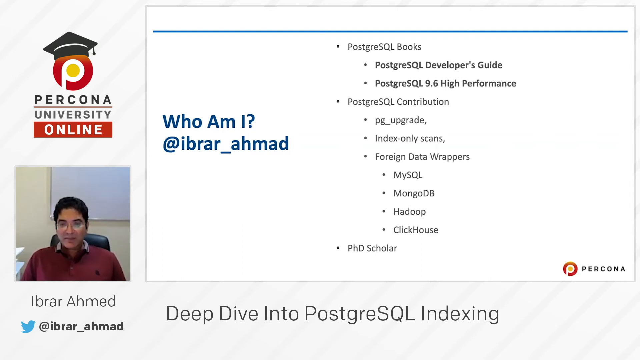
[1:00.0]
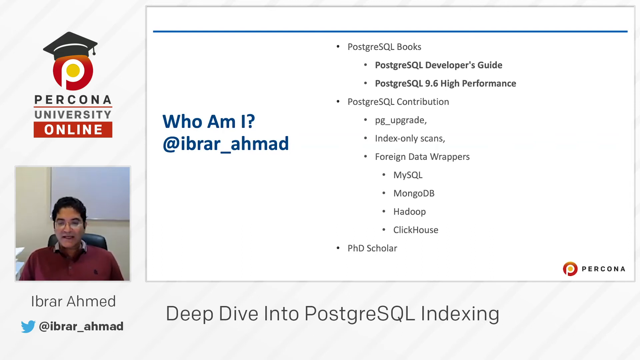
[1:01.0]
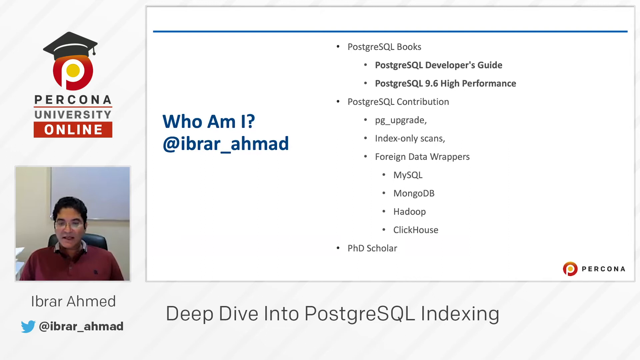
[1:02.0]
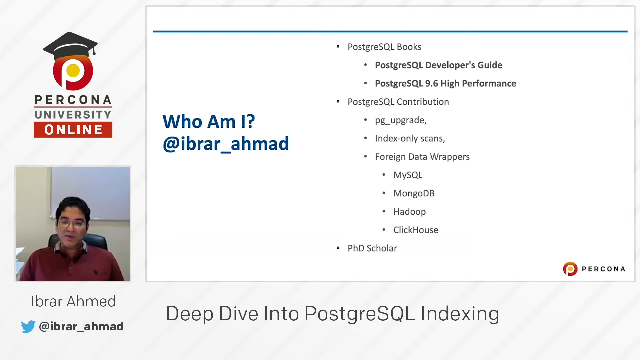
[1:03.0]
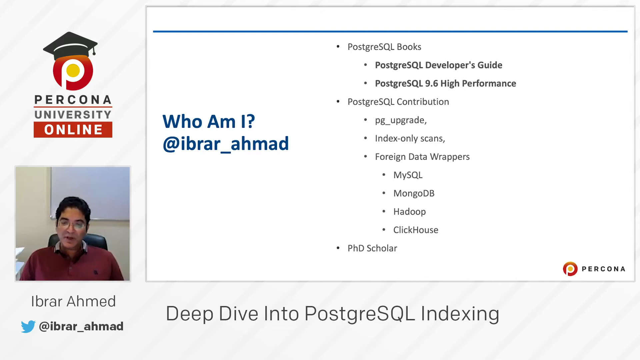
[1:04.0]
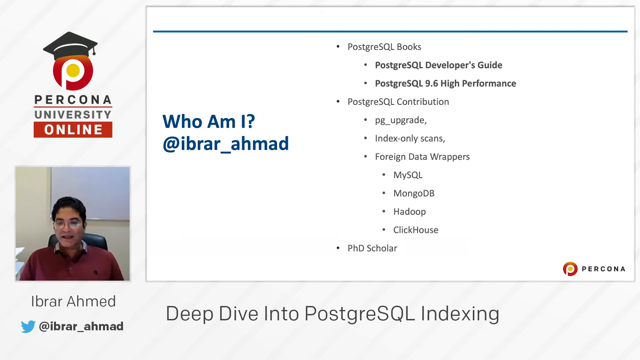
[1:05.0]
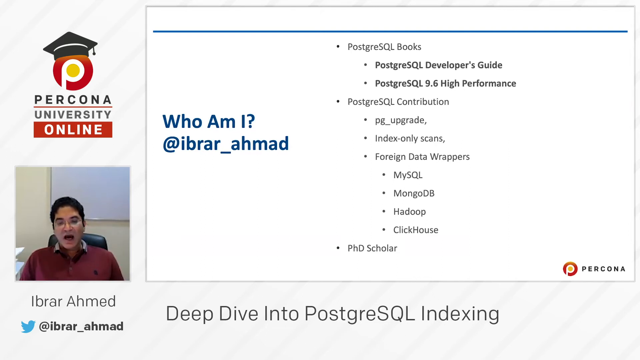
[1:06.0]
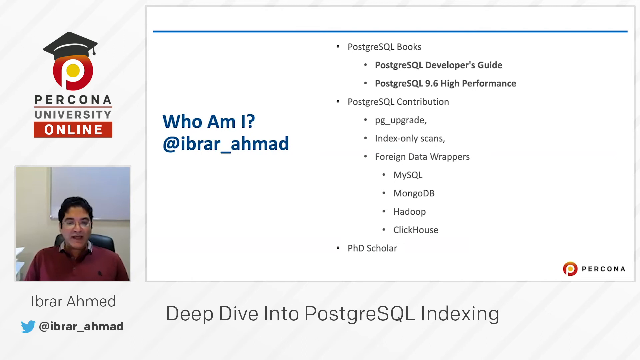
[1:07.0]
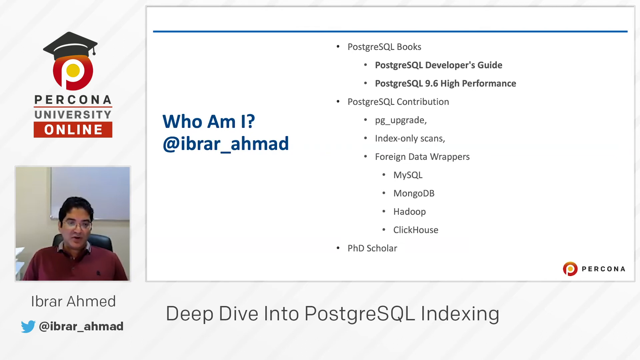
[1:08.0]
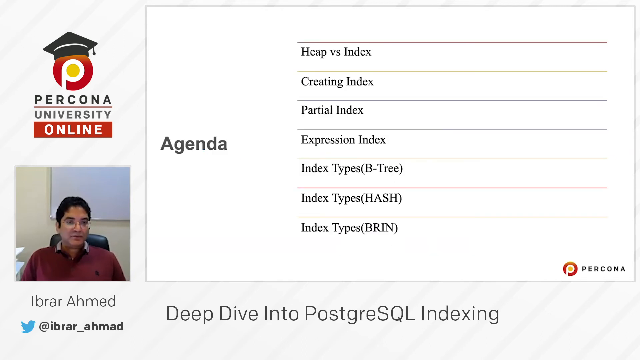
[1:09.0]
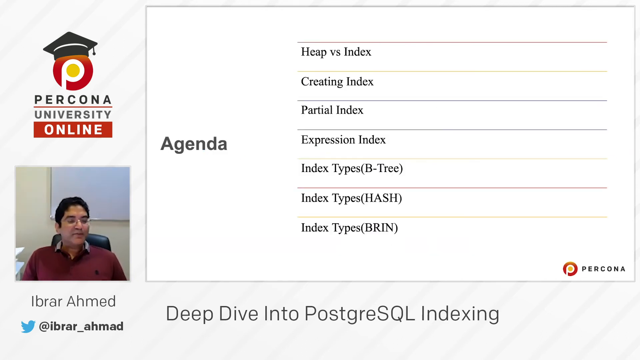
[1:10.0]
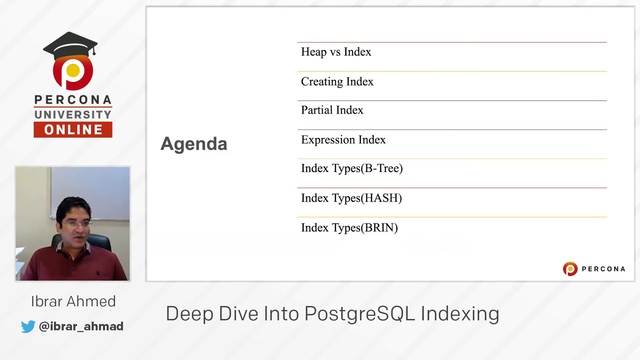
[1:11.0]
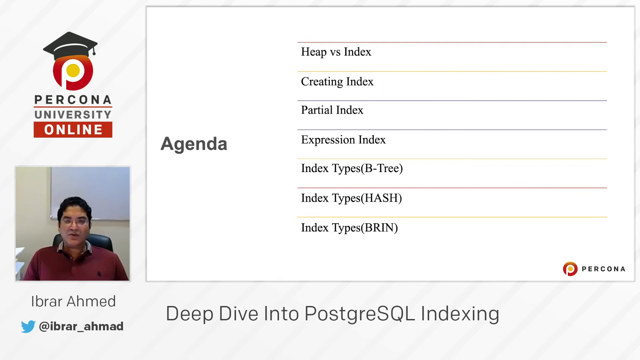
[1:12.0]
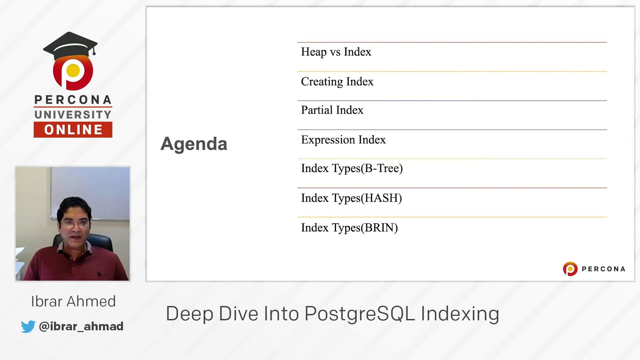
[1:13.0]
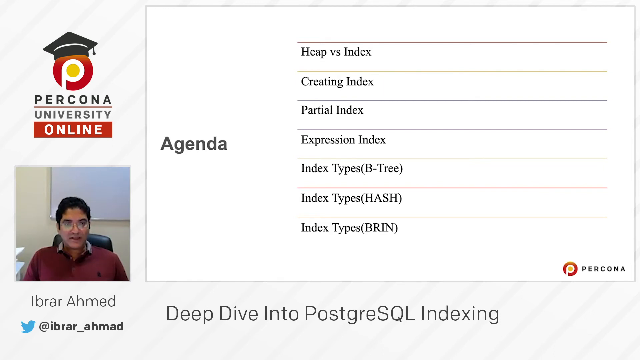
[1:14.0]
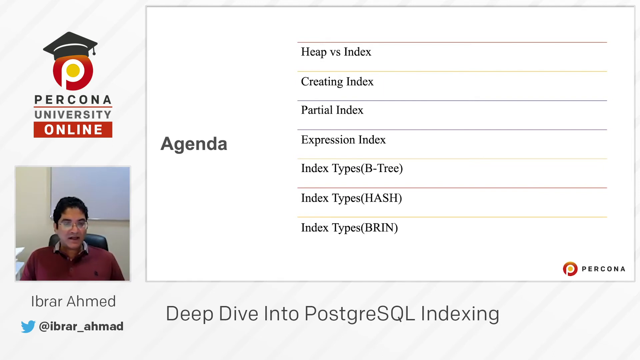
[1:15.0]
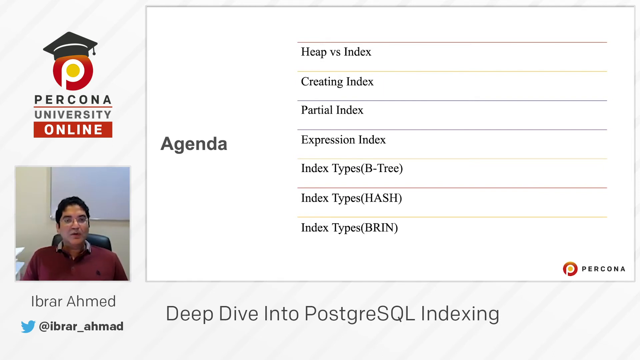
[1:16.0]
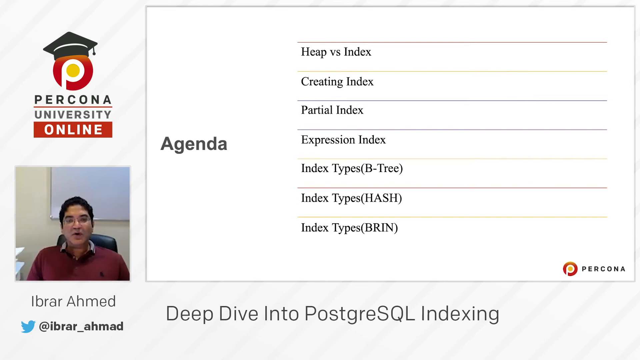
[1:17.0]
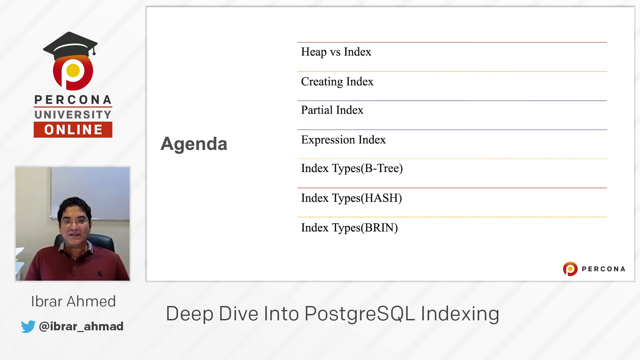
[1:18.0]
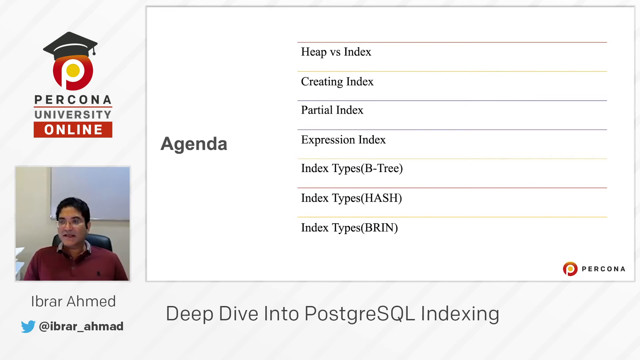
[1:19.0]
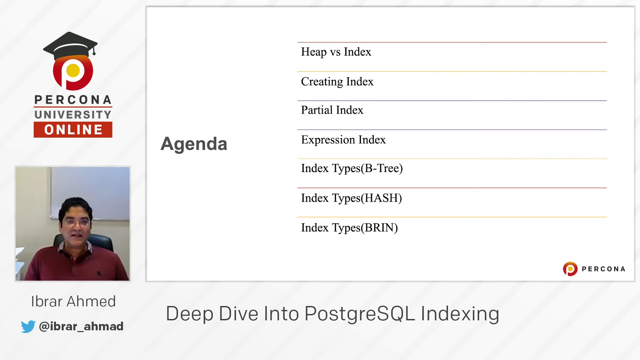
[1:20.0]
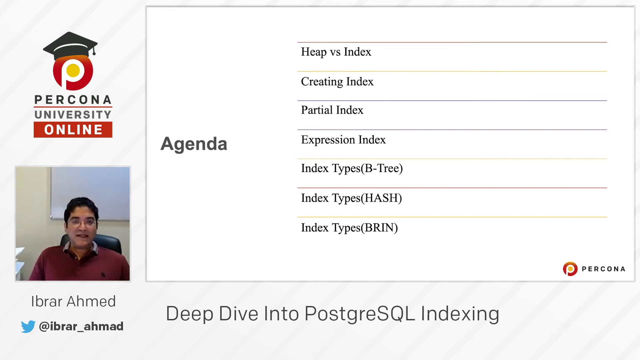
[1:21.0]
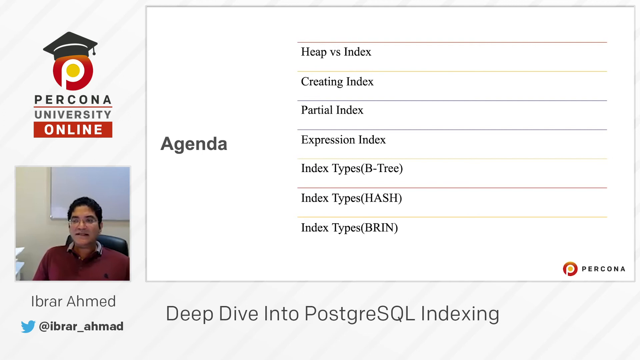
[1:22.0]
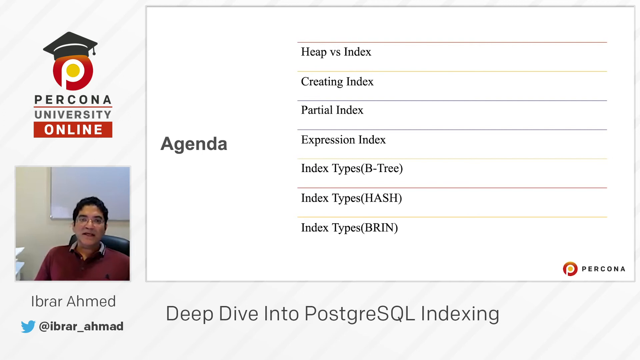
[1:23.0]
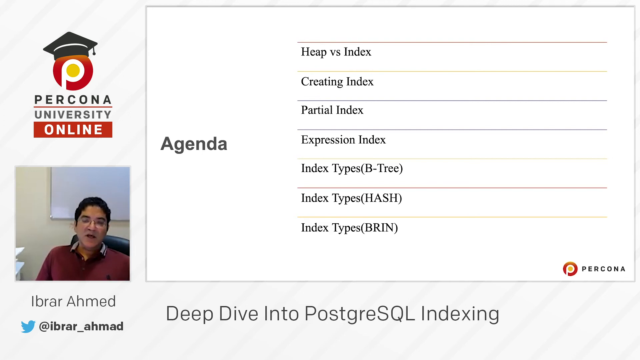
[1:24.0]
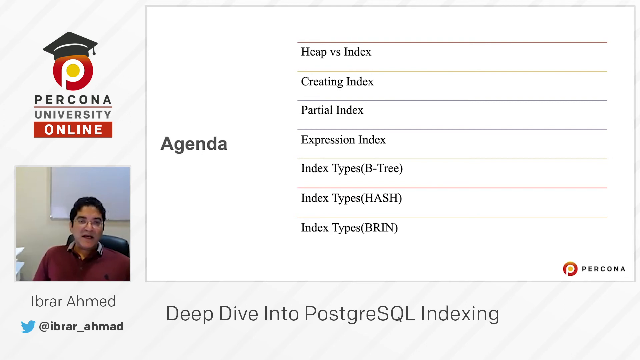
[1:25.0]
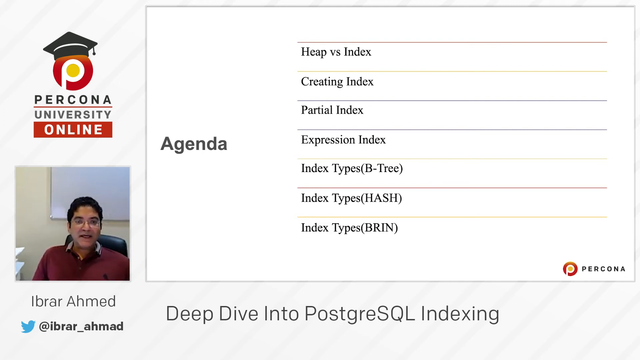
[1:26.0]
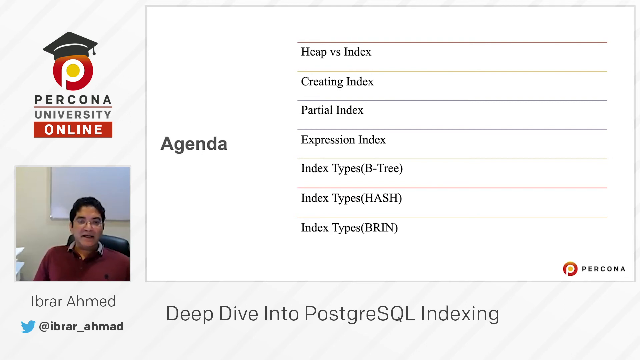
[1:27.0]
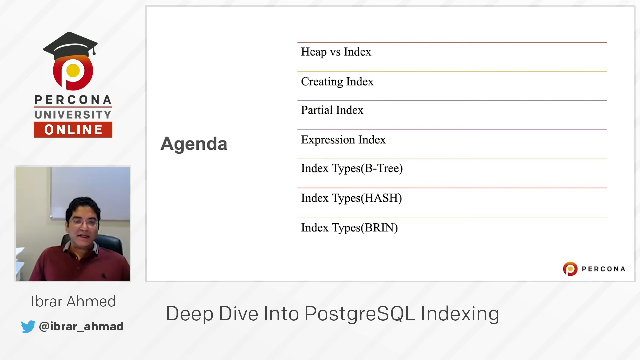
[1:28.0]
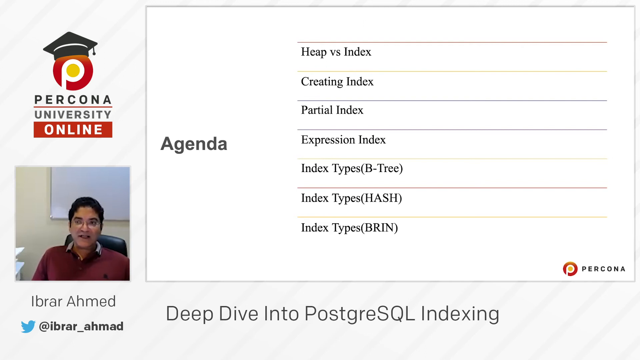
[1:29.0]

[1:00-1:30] A white box has a black or blue line at the top and bold blue text reading "who am I at Ibrar_Ahmed," with bullet points of black text reading "PostgreSQL books PostgreSQL developers guide PostgreSQL 9.6 high performance PostgreSQL contribution PG_upgrade index only scans foreign data wrappers MySQL MongoDB Hadoop ClickHouse and PhD scholar." A Percona logo is at the bottom, a red circle with a white P and a small yellow center. The same Percona circle appears on the left side with a graduation hat on it, with black text reading "Percona University" and a red line in between, and a red banner box with white text reading "online." A man sits on a chair; he wears glasses, looks to be Indian, and talks to the camera. His name, "Ibrar Ahmed," is underneath, with his Twitter handle and the small Twitter bird next to it, and the title of the video reads "Deep Dive into PostgreSQL Indexing." He then goes to another screen with text reading "agenda," where red, yellow, and gray lines run across the screen with text between each line reading "heap versus index, creating index, partial index, expression index, index types B tree, index types hash, and index types brin."